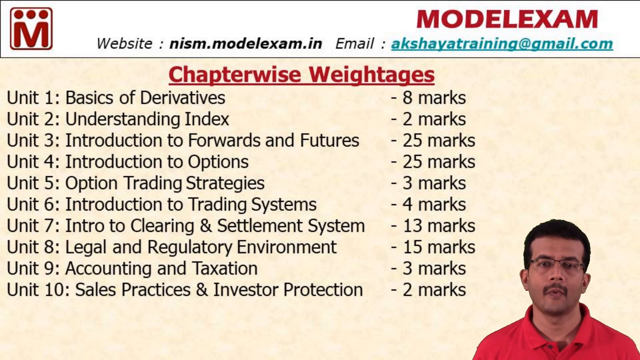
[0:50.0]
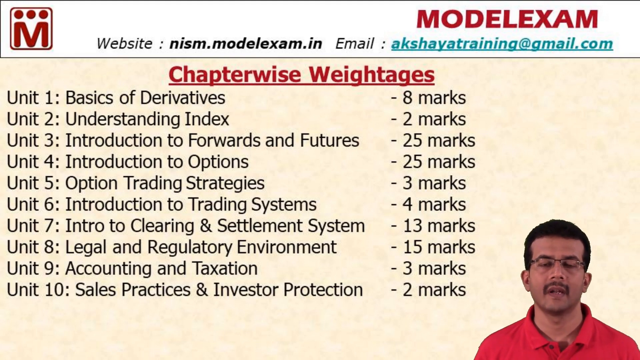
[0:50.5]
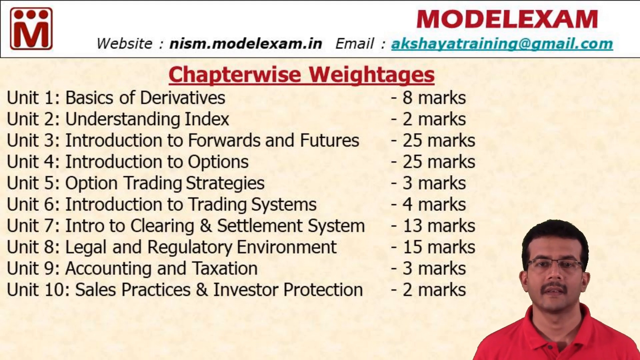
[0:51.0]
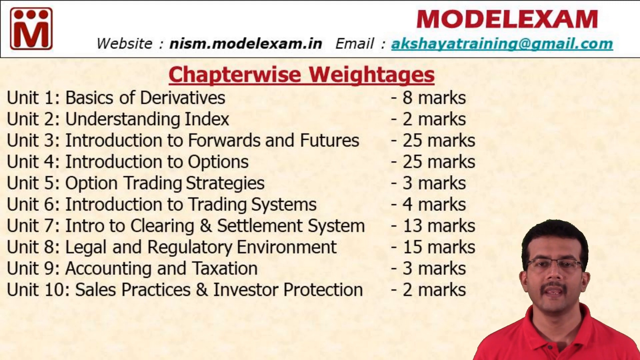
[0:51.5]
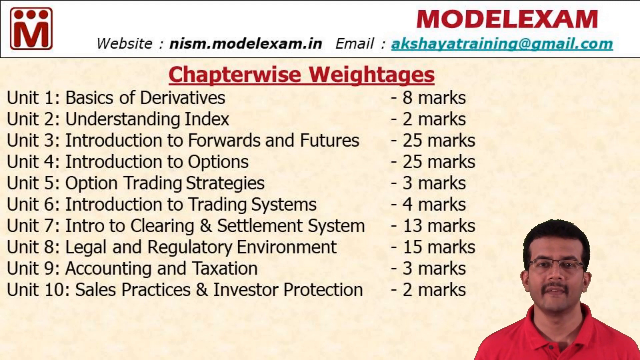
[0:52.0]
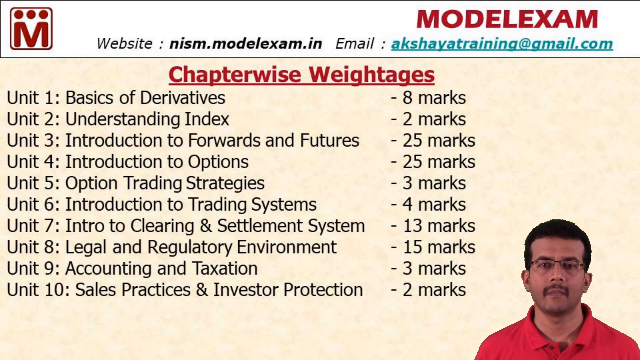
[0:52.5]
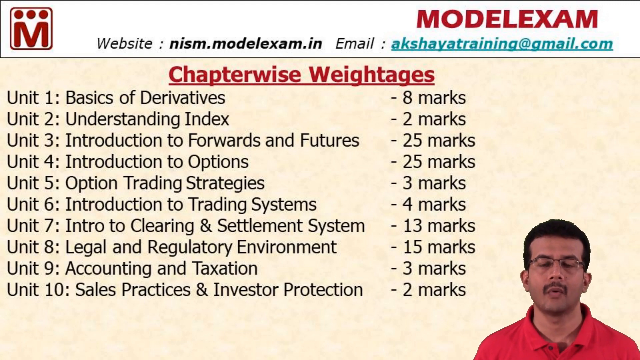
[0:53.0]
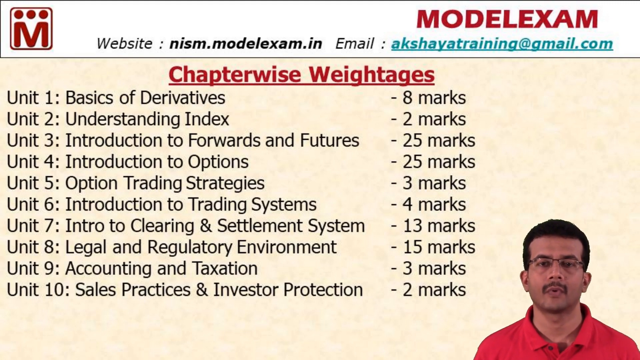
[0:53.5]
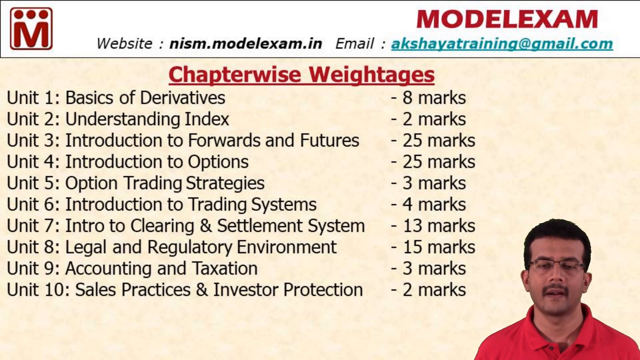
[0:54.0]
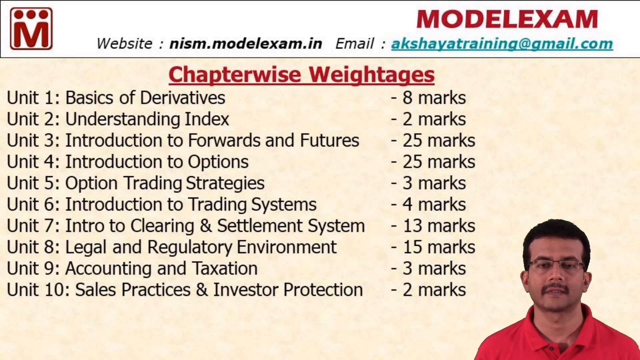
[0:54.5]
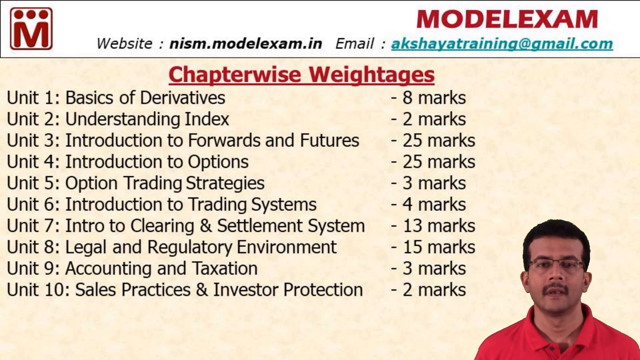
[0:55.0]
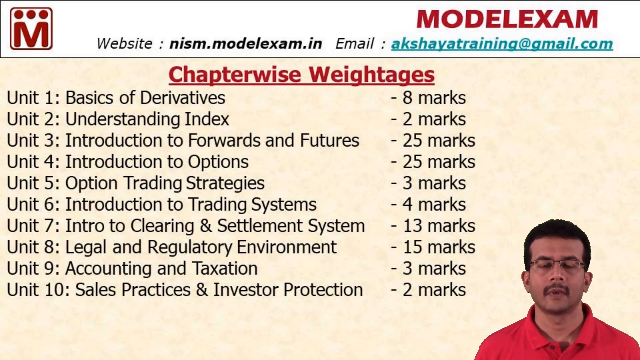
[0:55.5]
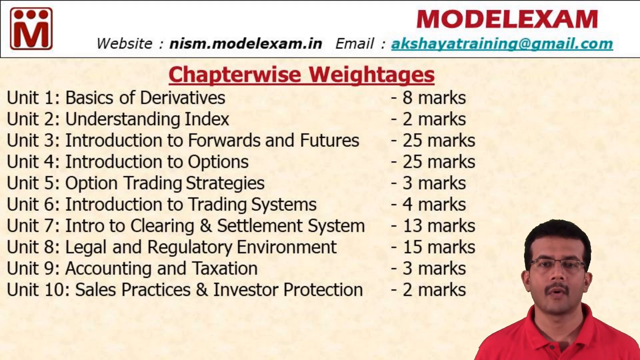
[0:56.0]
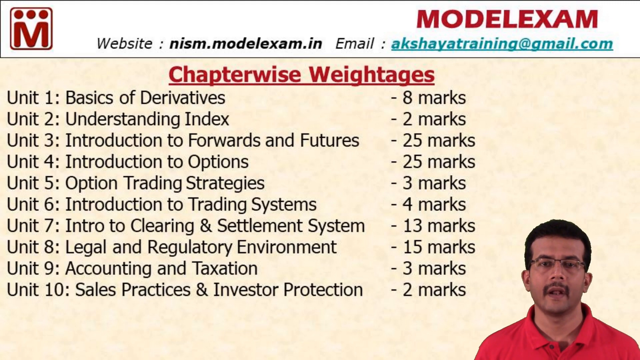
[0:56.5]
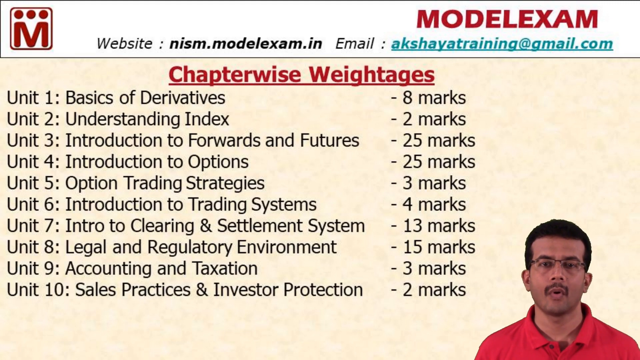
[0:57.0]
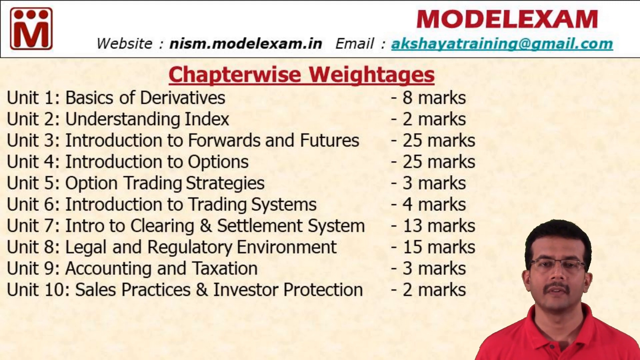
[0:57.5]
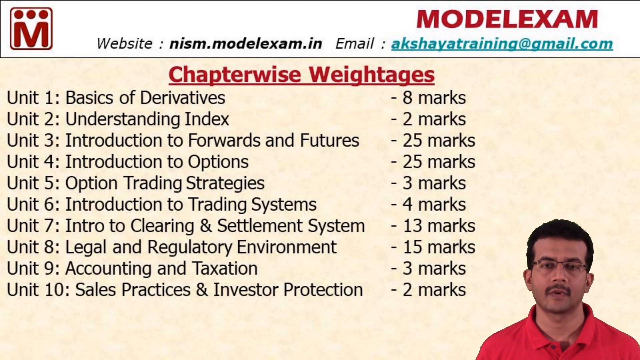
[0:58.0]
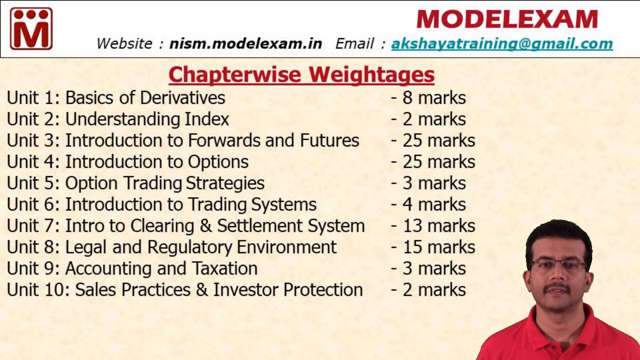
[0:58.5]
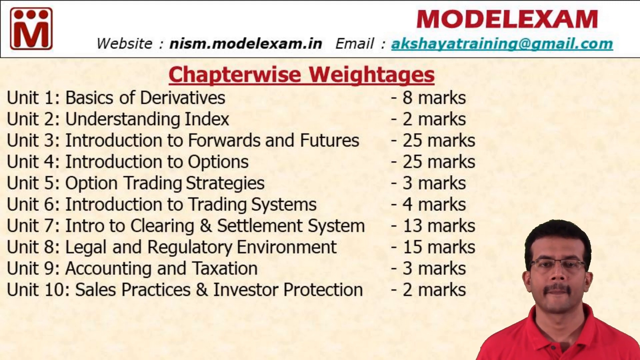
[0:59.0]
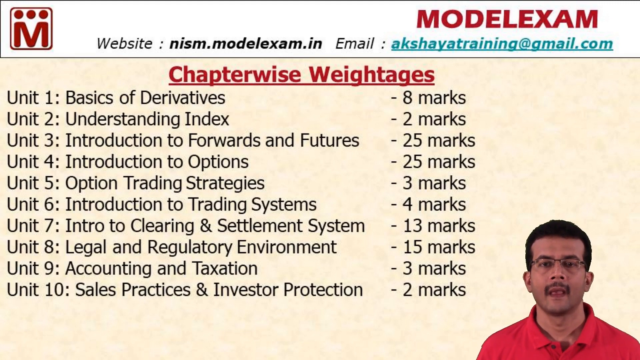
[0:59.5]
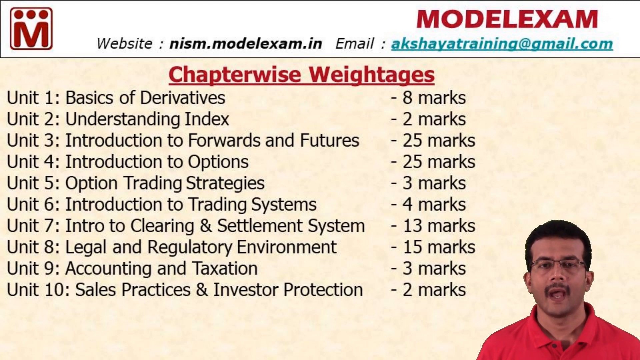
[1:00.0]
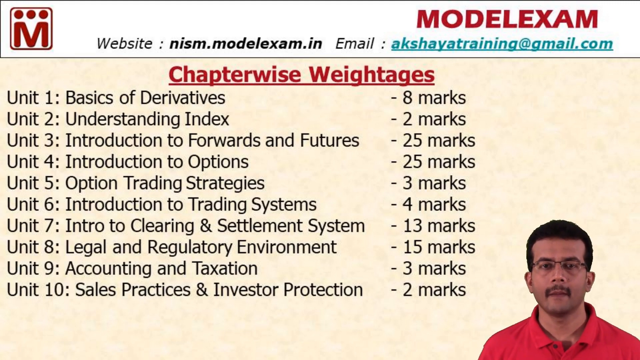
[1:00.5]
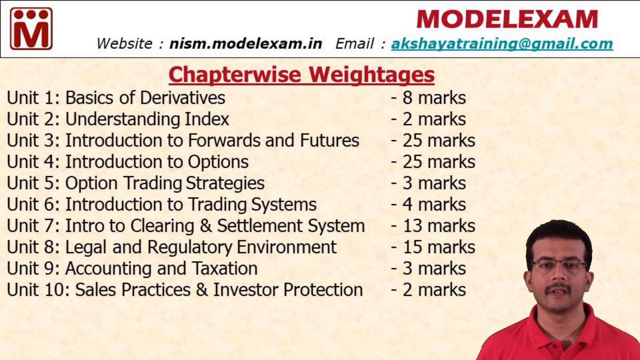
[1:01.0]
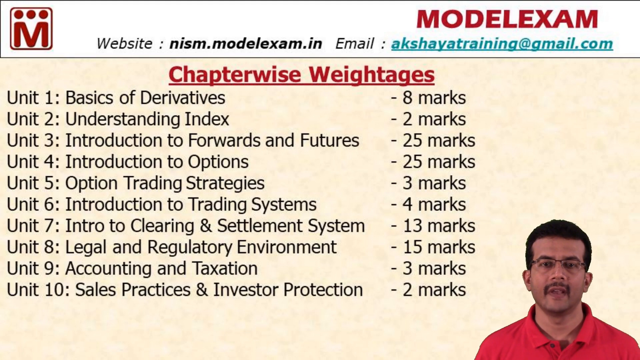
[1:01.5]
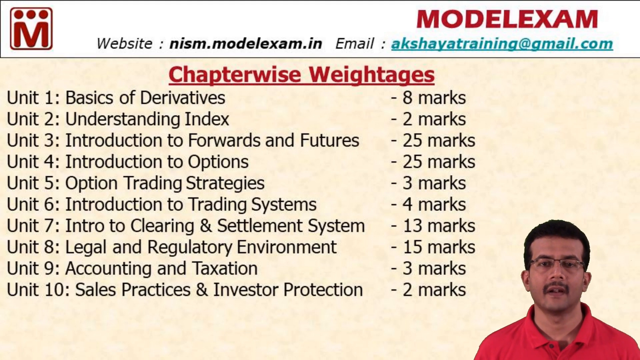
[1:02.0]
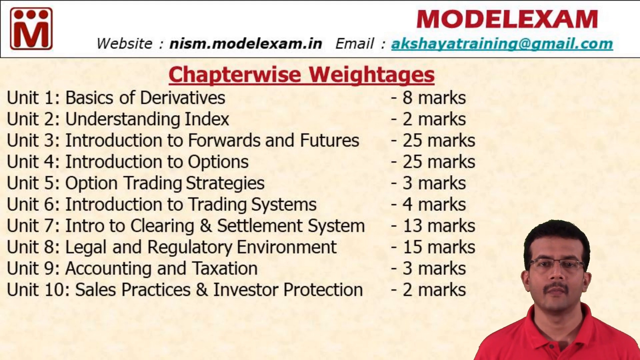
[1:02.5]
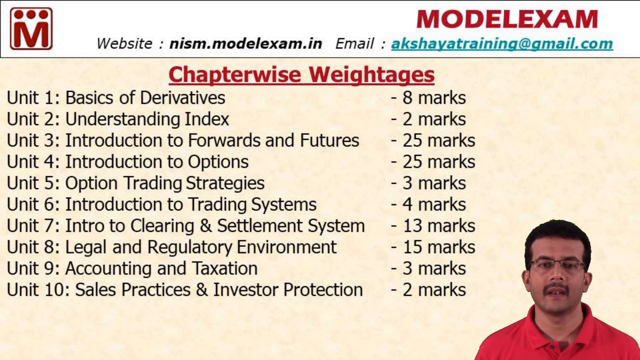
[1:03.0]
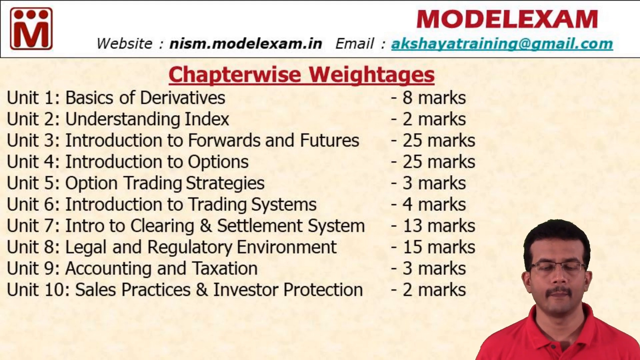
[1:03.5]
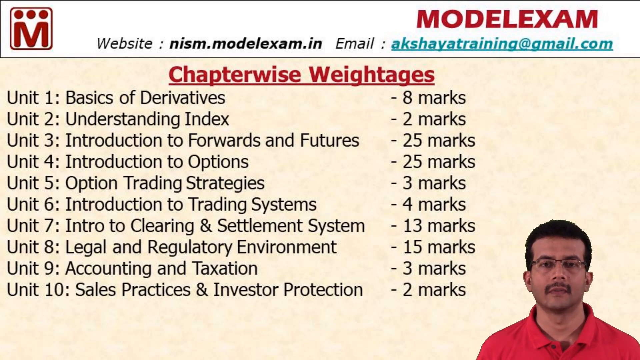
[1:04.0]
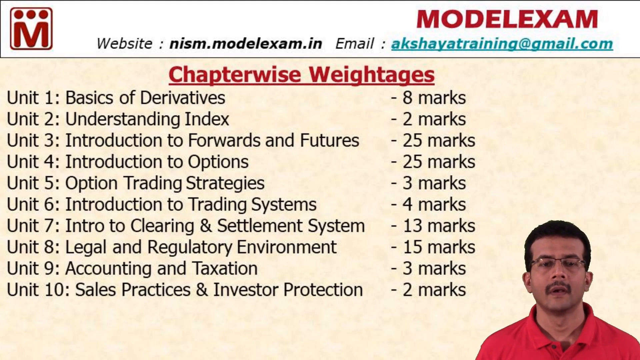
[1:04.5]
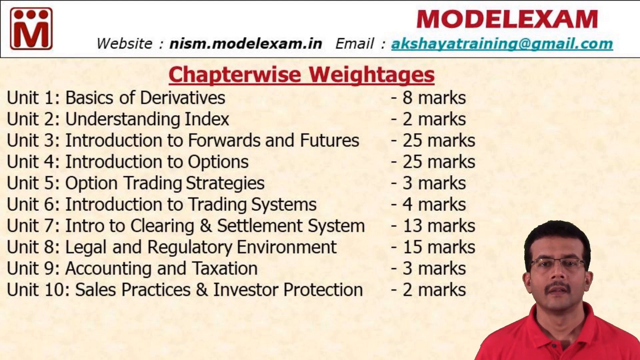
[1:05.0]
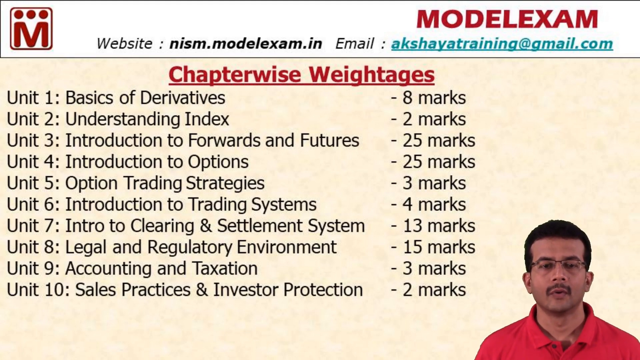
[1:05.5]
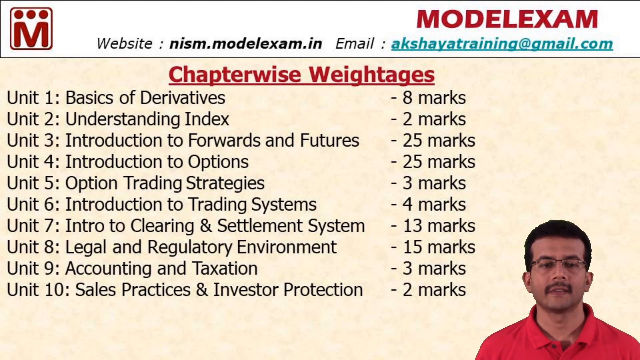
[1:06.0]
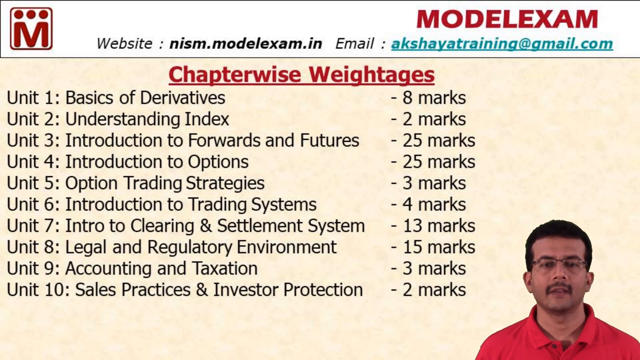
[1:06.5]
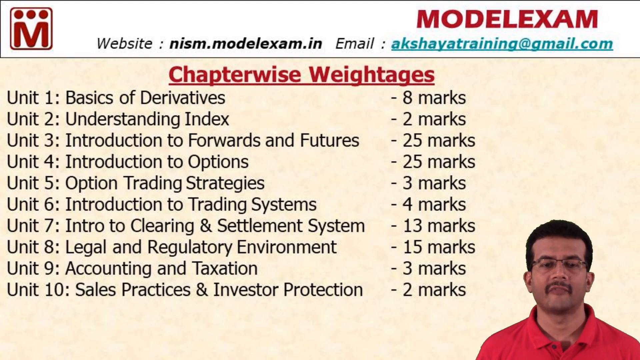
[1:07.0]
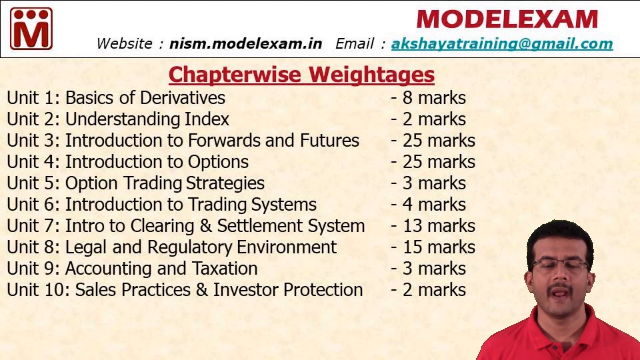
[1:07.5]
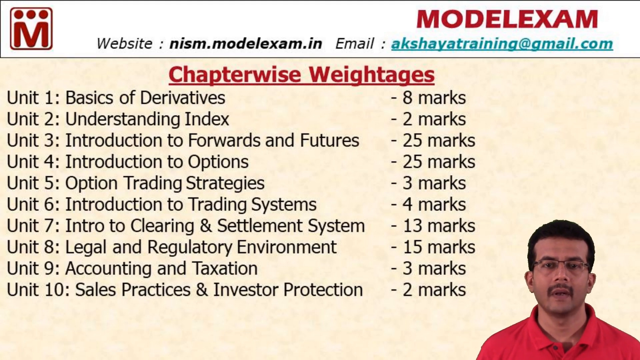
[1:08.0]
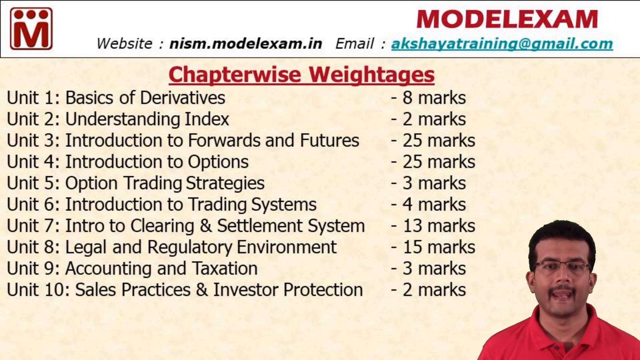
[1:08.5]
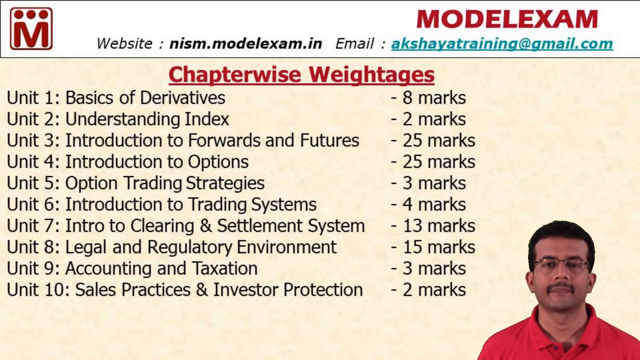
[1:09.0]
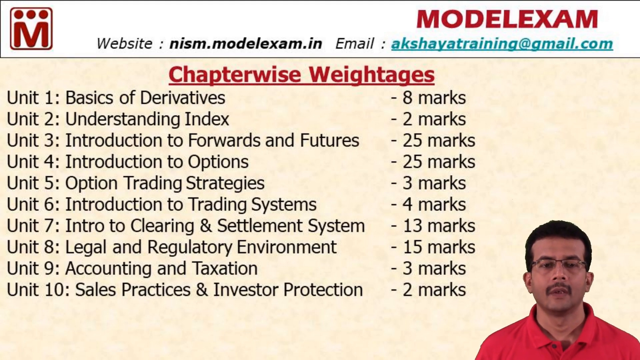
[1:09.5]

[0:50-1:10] Visible from the shoulders up, the man wears a red shirt with a folded-down collar and rectangular glasses that appear to have a frame only along the top of the lenses and not the bottom. He has dark, close-cropped hair and a mustache. He appears to look at the camera as he speaks, though he sometimes looks down as if reading off something. His expression is neutral. He does not really change position; he moves only slightly, in a natural way, and otherwise stays in place. The background text and the background coloring are static.